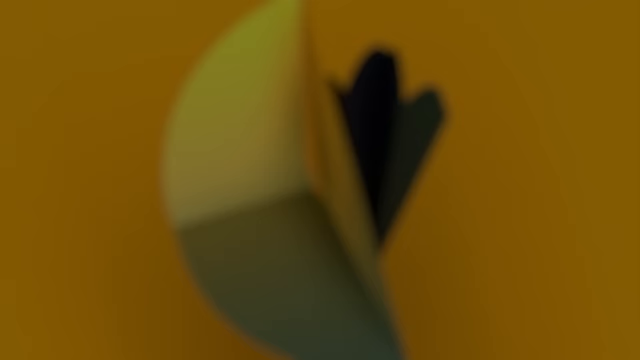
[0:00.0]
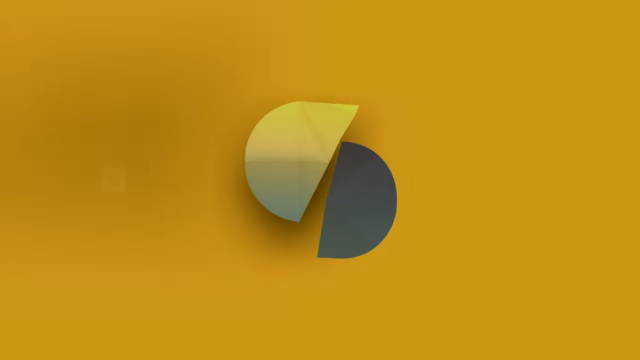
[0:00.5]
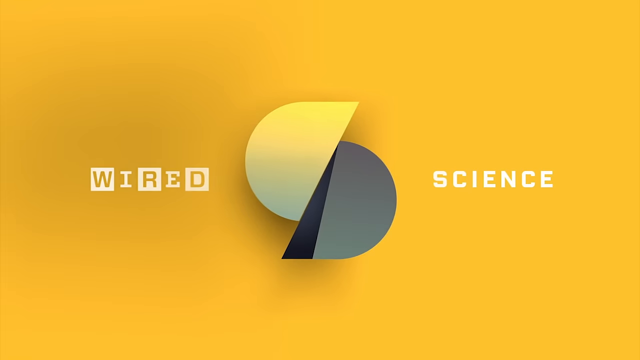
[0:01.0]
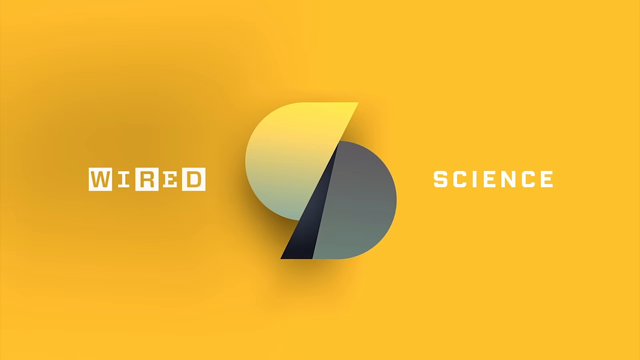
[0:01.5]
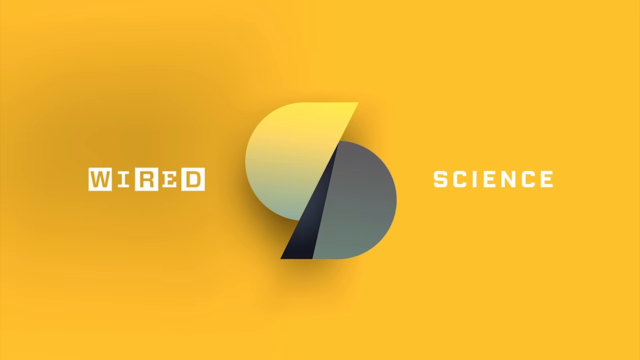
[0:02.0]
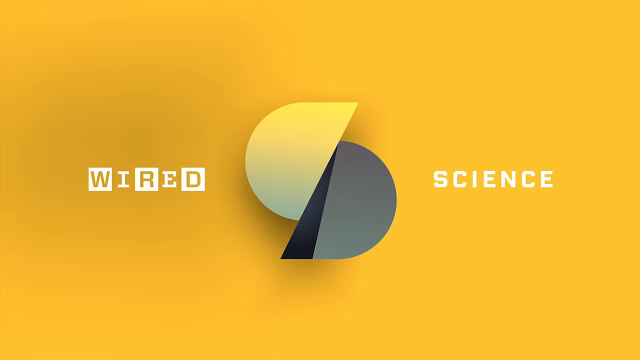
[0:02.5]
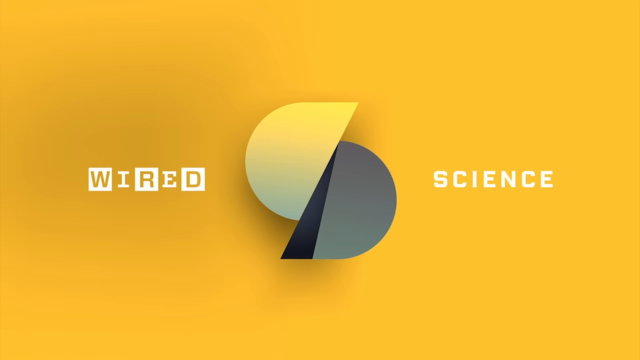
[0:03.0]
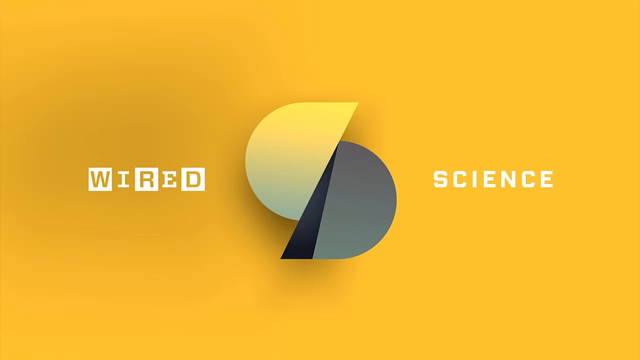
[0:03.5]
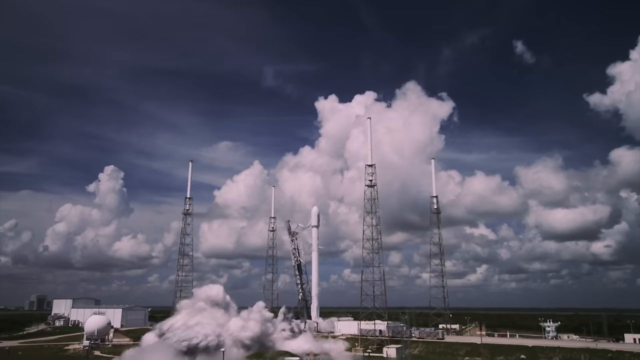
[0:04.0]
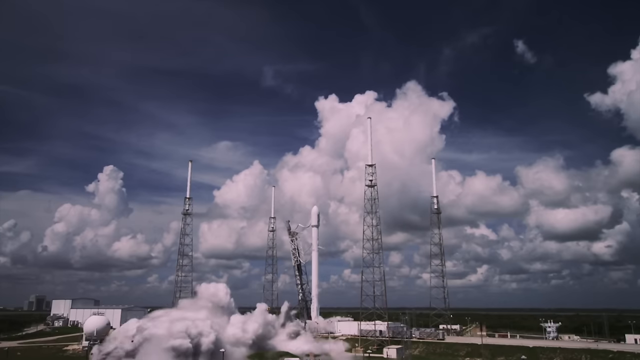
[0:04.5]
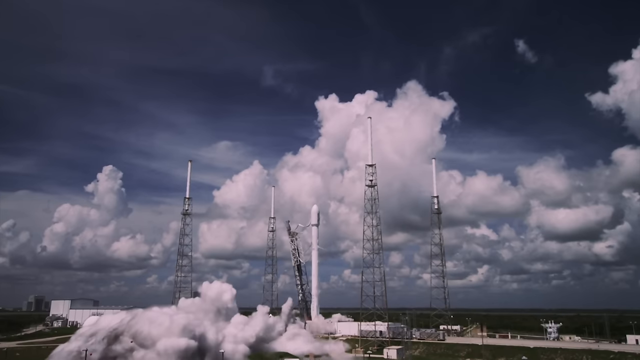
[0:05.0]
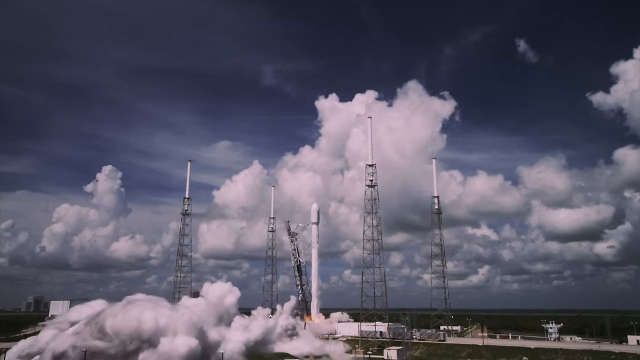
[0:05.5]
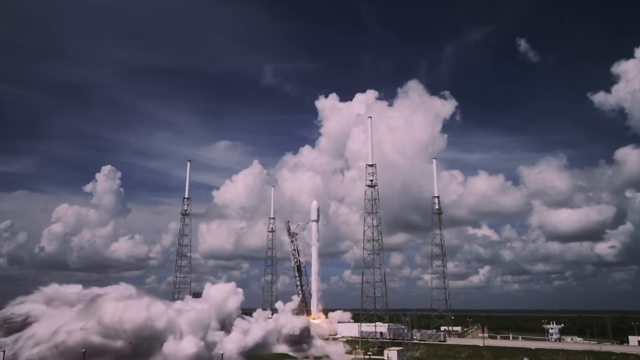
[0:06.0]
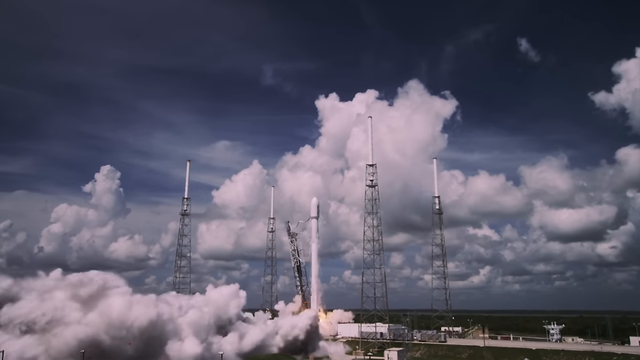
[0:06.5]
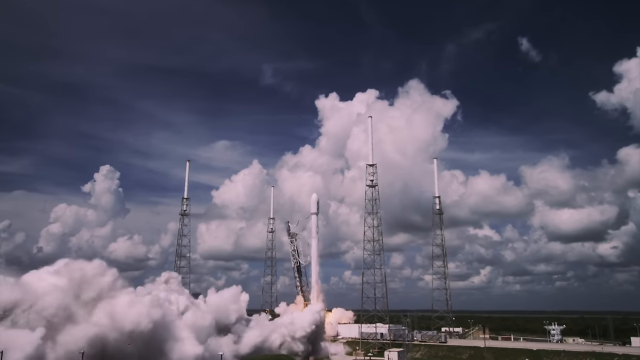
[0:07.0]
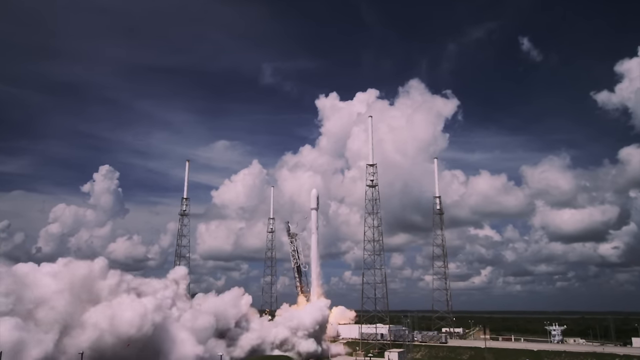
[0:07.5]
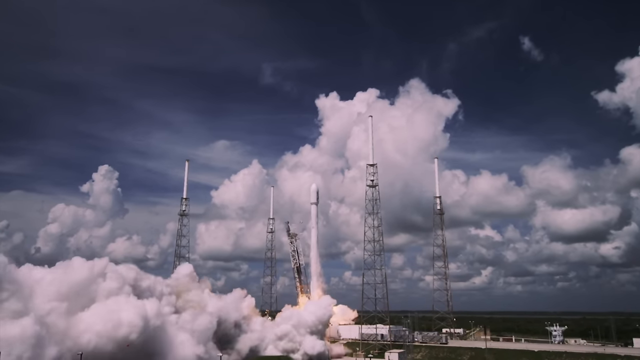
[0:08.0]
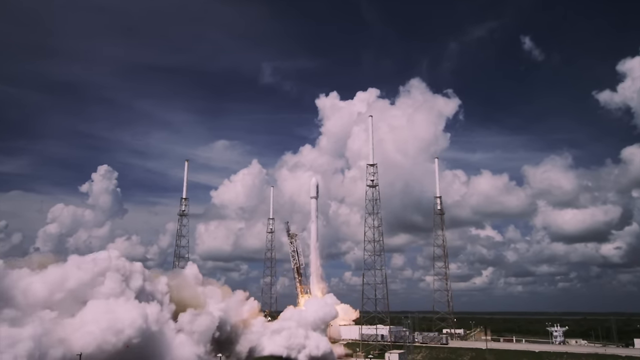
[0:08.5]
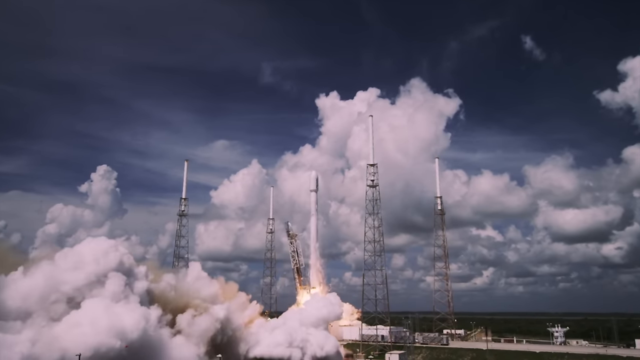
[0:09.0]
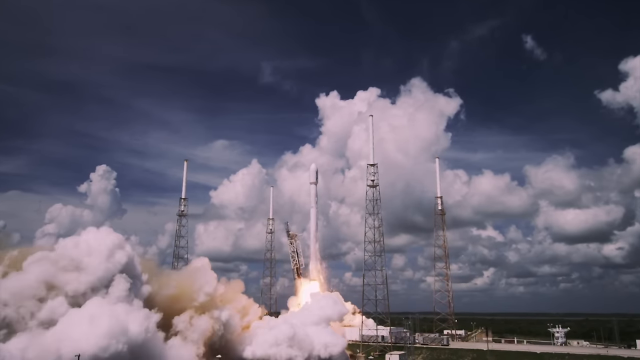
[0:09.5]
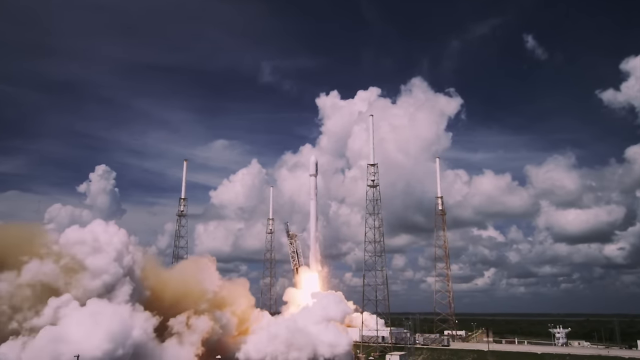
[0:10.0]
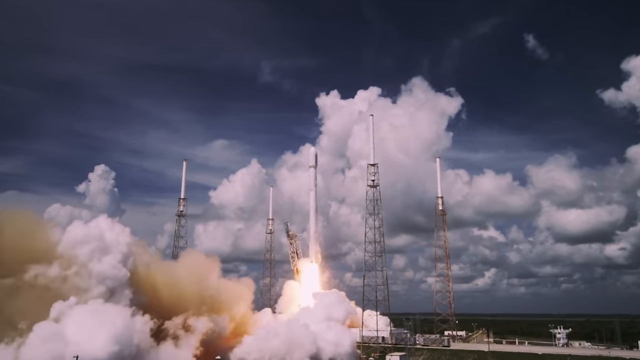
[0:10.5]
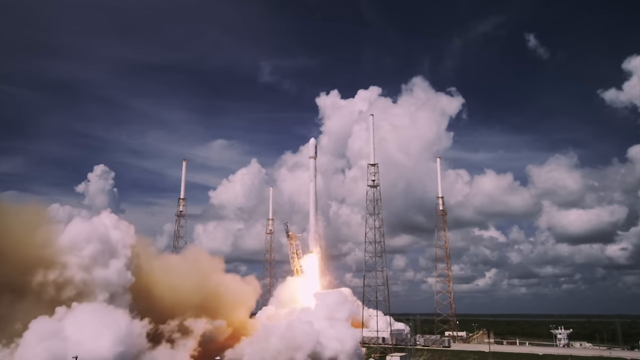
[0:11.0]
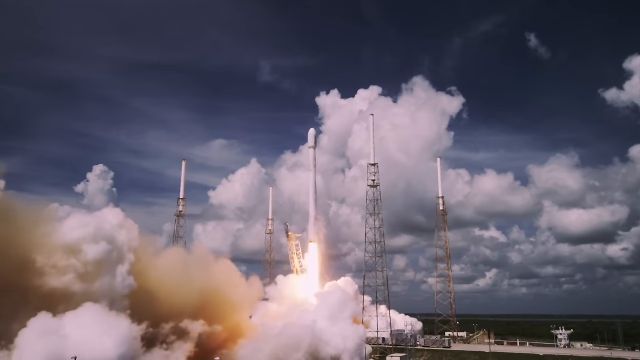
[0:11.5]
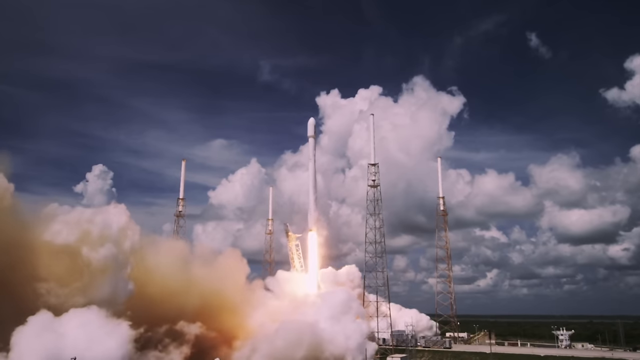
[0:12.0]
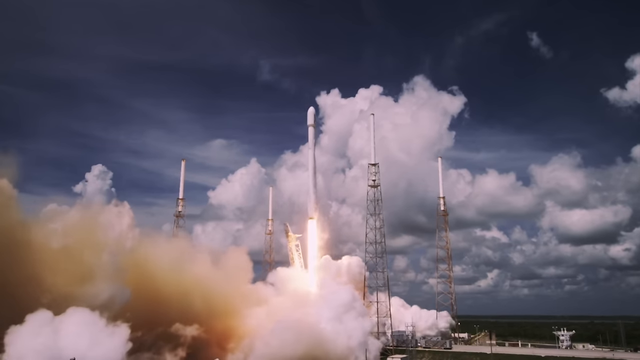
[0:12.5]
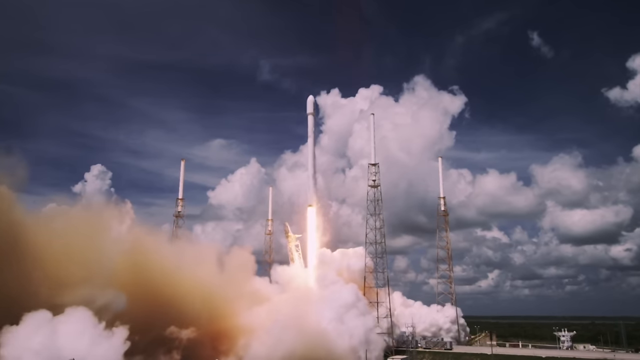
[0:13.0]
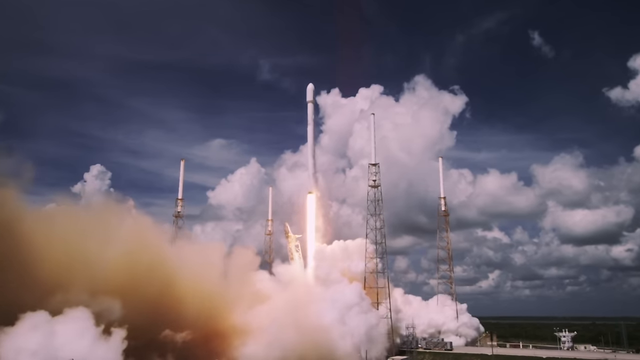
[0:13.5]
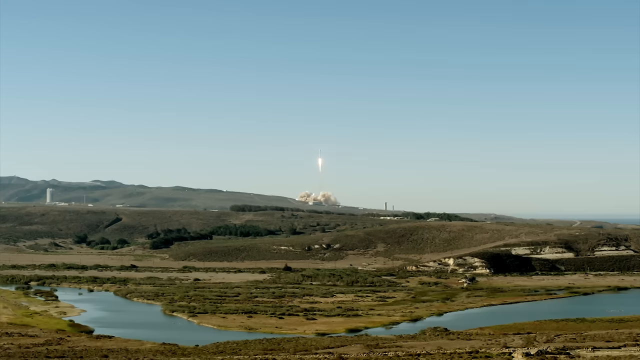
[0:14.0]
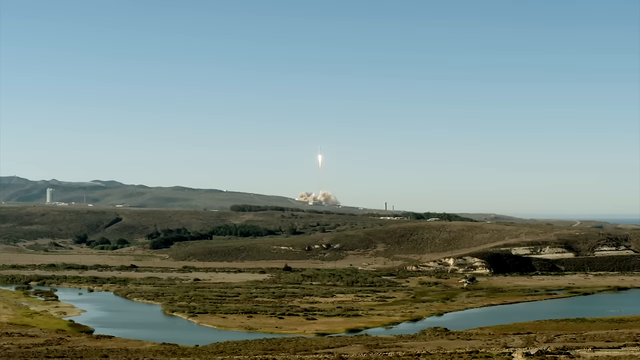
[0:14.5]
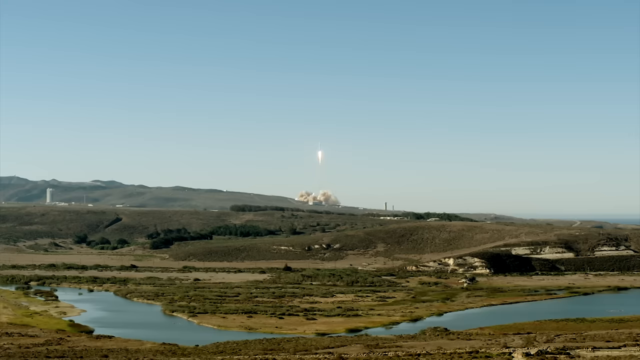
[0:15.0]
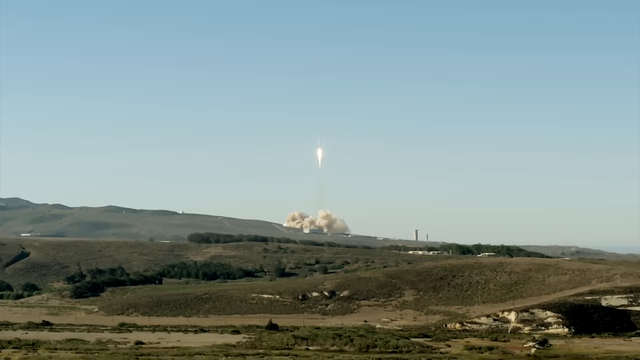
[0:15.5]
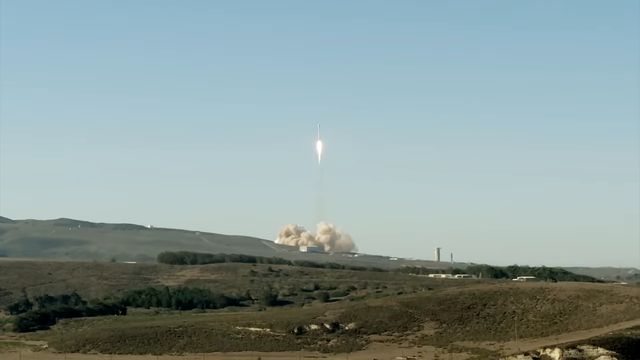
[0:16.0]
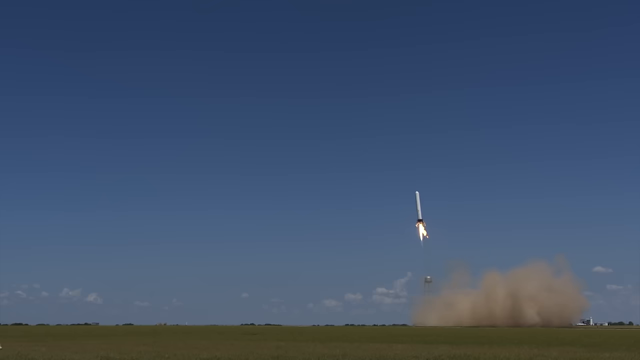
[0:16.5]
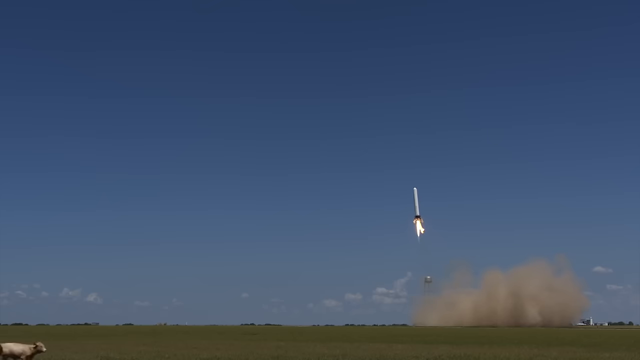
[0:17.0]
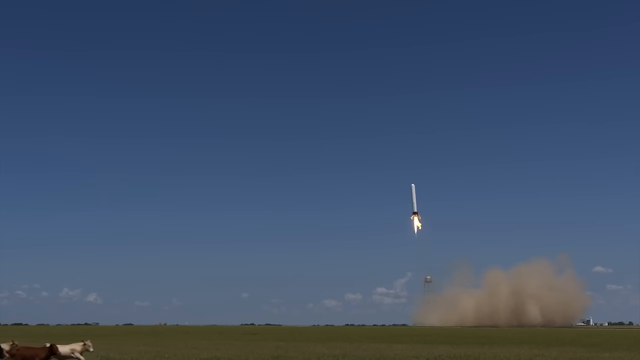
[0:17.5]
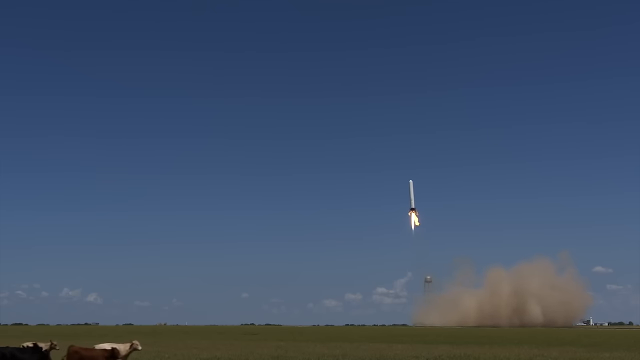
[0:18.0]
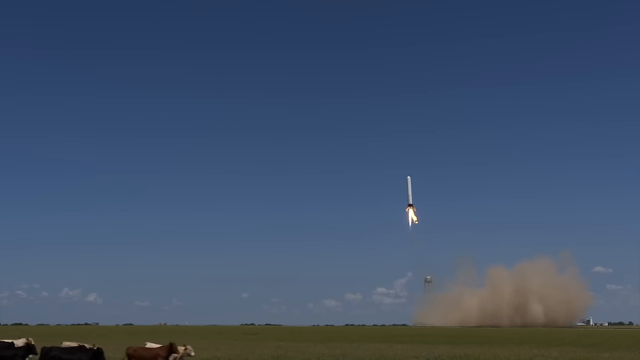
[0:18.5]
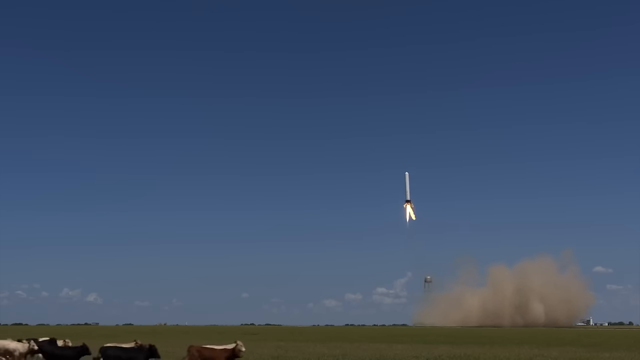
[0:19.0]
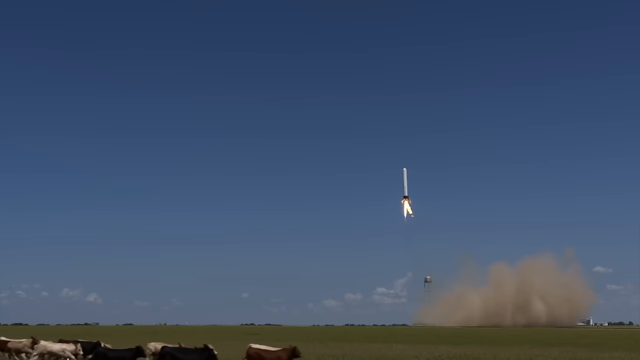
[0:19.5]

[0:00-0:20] The video opens on a yellow screen. Suddenly two semicircles appear, one at the top left and one at the bottom right, white and black, together forming almost an S letter. The words "Wired Science" then appear in white on the yellow background as the intro screen. The video transitions to what looks like a very long white rocket taking off. There are four towers around it, apparently made of metal, and white cylinders at the top. As the rocket takes off, fire comes out of it and a lot of white smoke pours out at the bottom left and bottom middle of the frame. The video zooms out to reveal a vast green land with rolling hills, with the rocket in the far distance taking off and going upward. The camera then zooms in on the rocket, with a lot of clouds at the bottom. The rocket flies not quite straight up but diagonally upward and to the left, against a blue sky. Cows run from left to right along the bottom of the screen. The launch is seen from three angles: one close, one very far away, and one moderate.